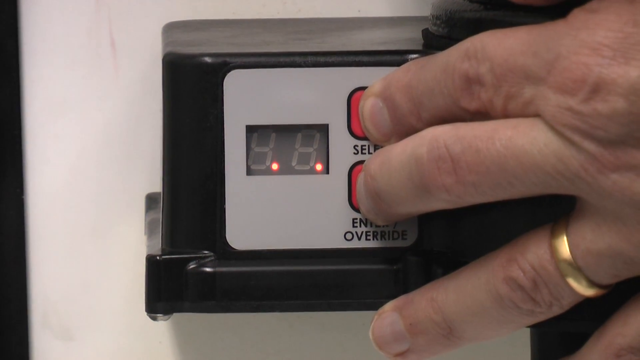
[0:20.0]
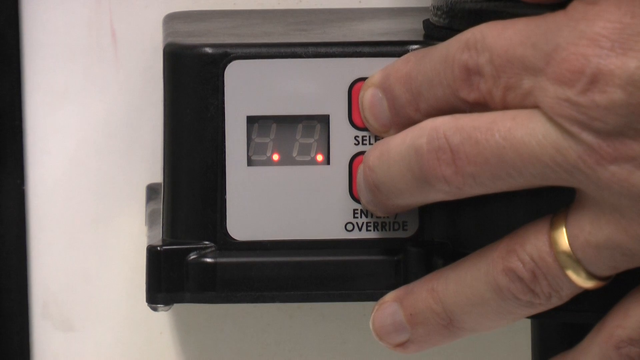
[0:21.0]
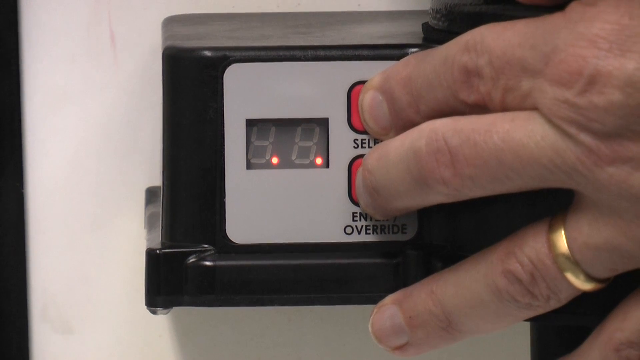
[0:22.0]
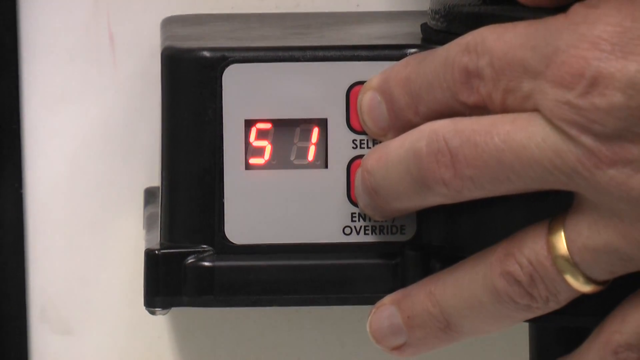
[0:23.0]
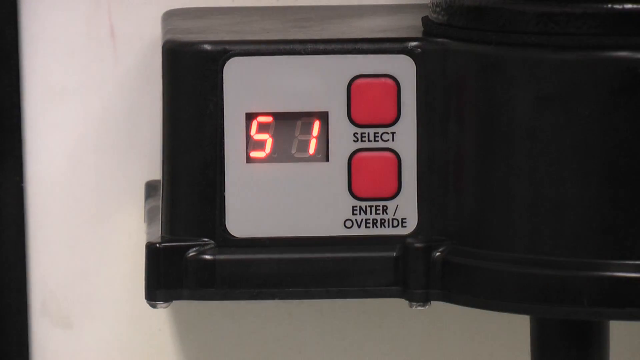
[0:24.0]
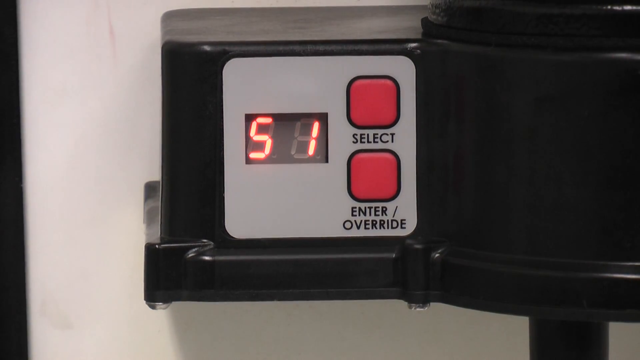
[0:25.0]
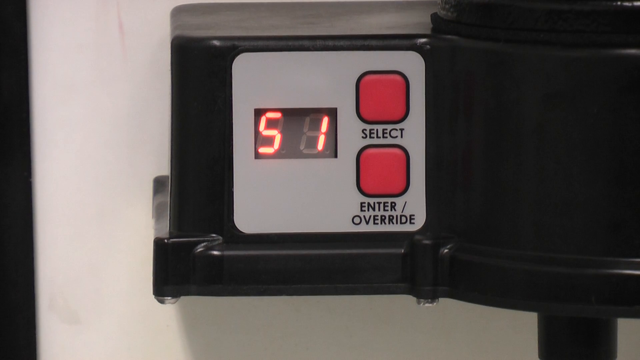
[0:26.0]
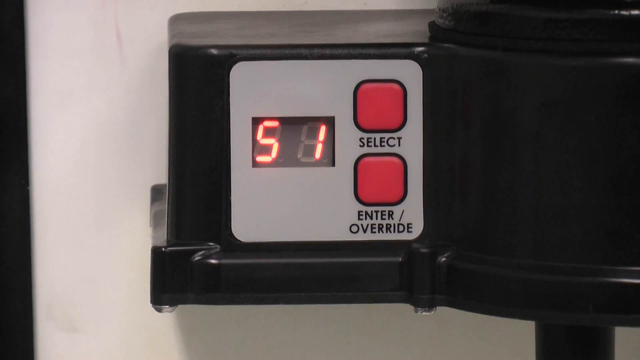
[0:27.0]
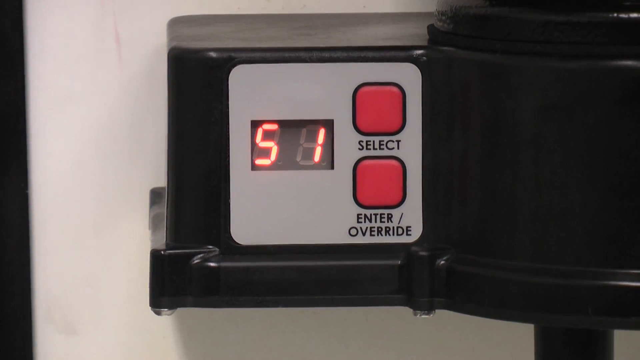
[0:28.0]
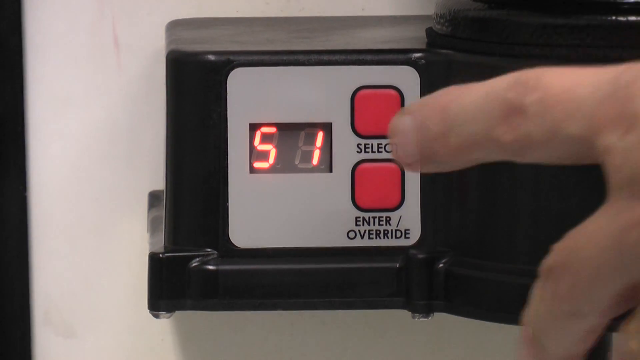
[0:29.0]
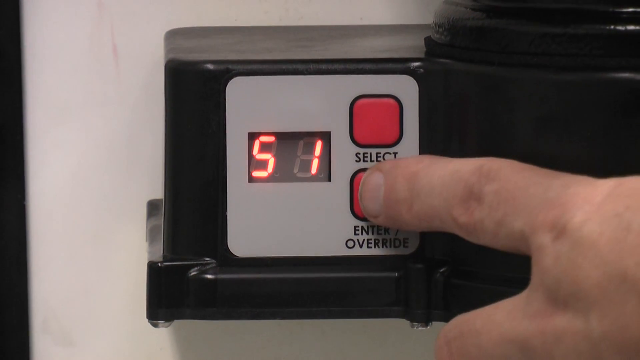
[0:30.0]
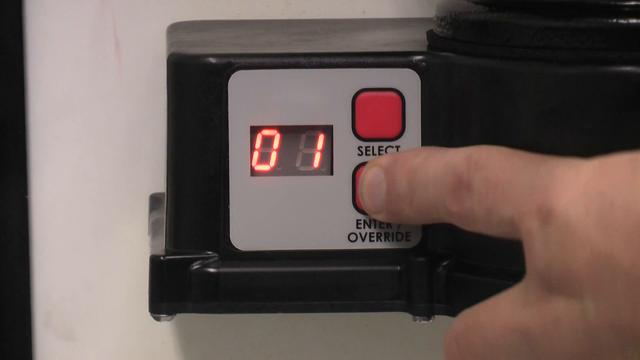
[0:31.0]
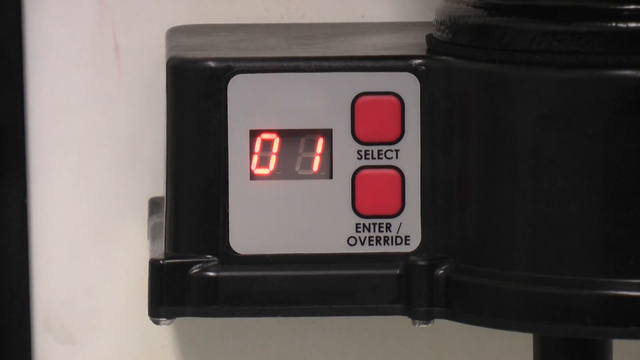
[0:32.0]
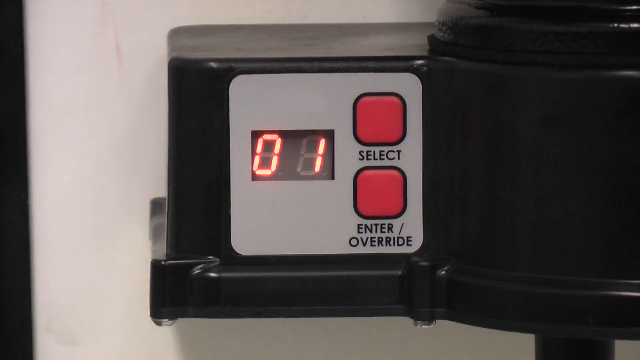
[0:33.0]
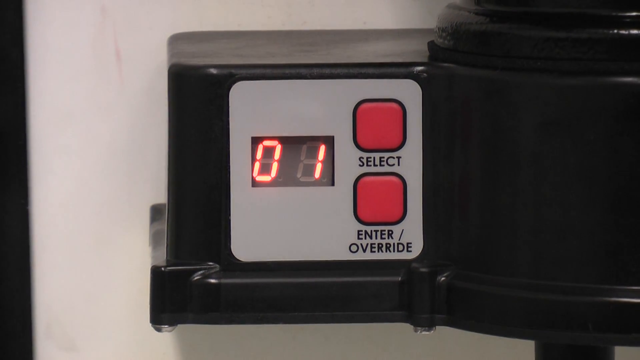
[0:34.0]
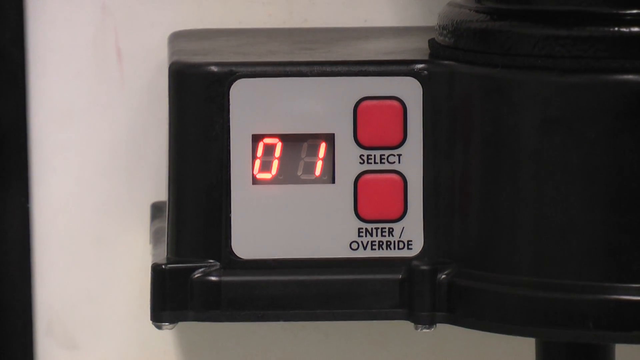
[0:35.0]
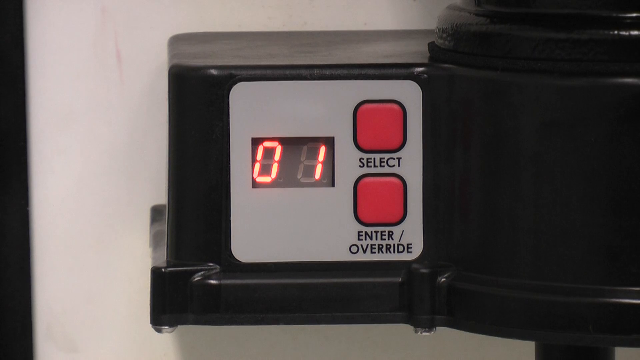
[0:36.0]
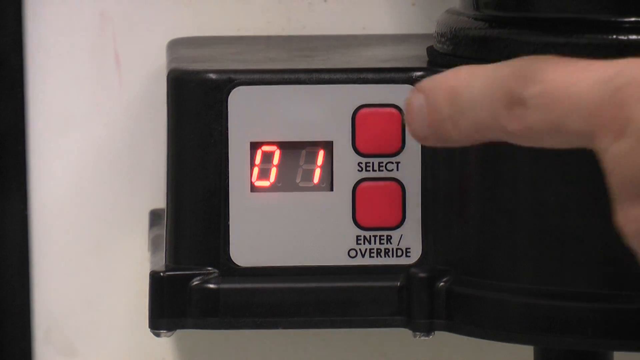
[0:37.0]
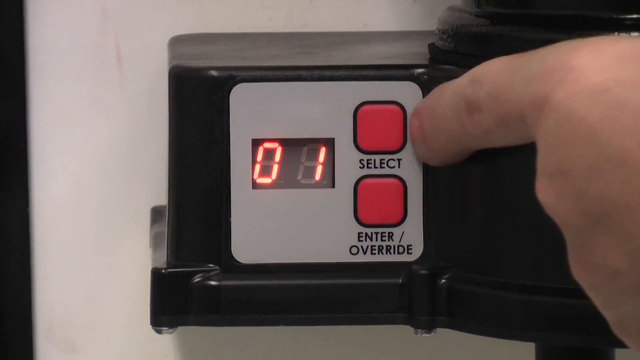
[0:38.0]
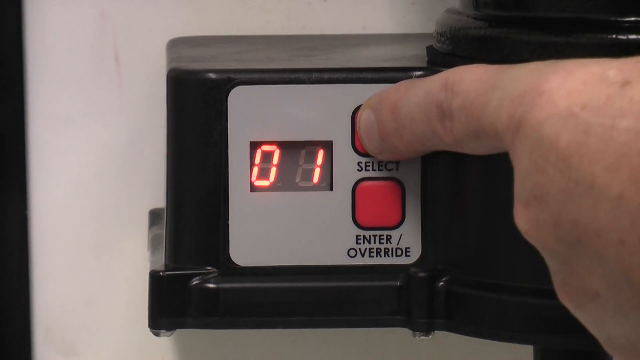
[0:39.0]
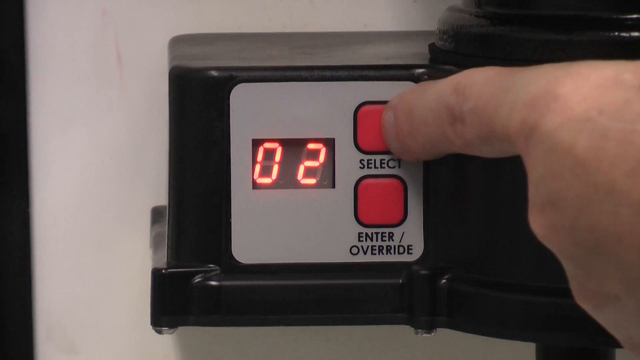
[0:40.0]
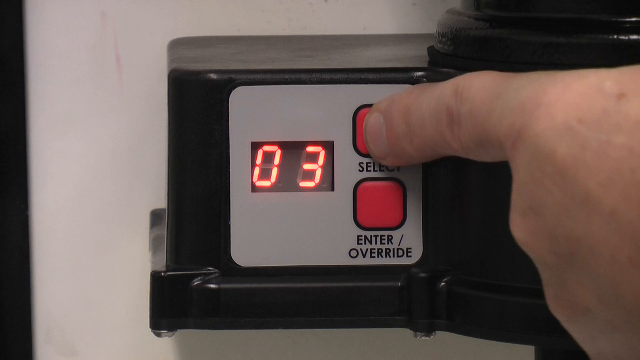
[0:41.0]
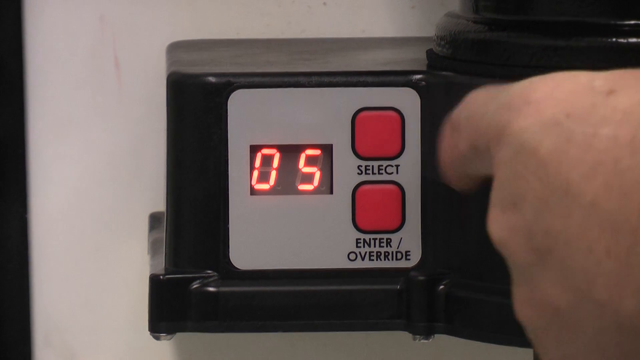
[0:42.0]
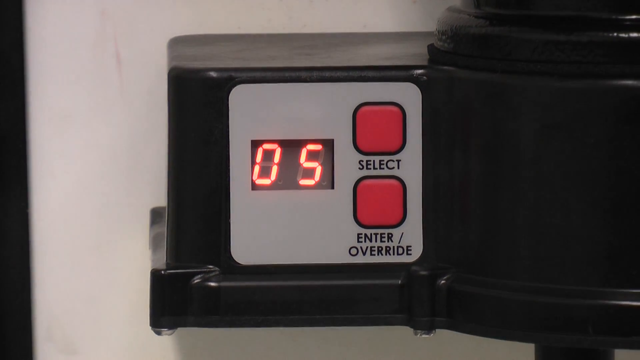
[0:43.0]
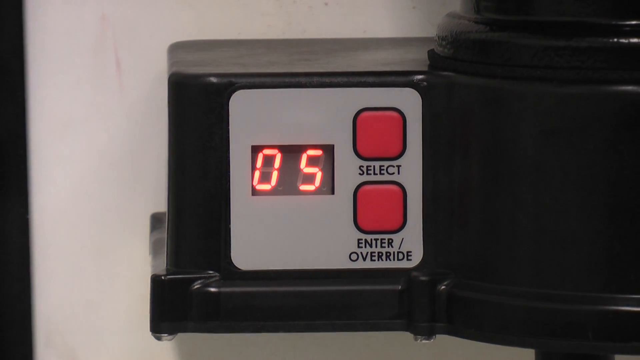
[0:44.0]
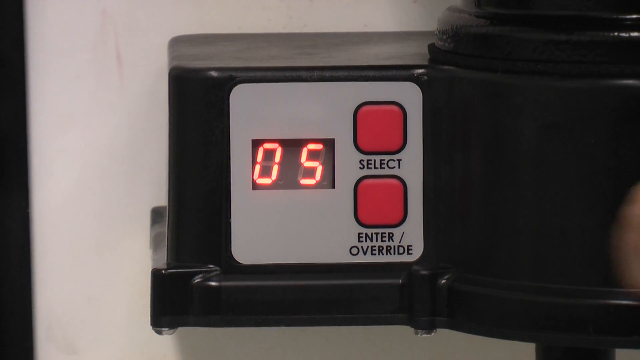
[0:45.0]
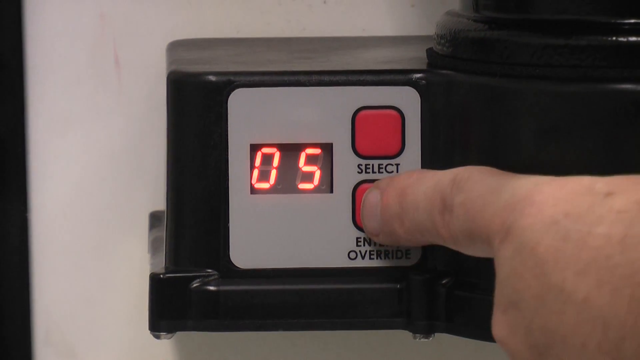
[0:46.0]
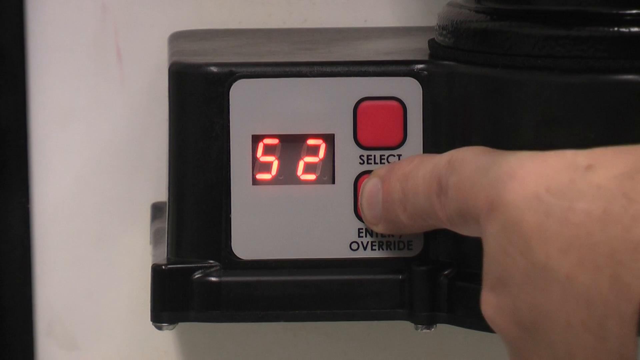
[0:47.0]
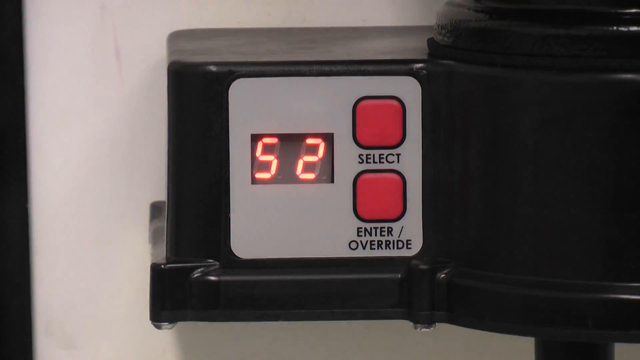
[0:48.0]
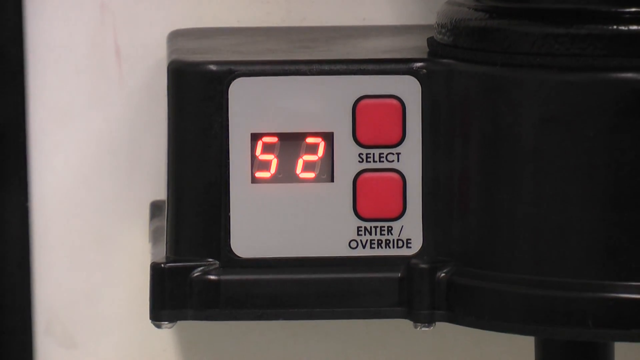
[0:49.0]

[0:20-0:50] A hand that looks like a man's, wearing a wedding ring, presses the "select" and "enter/override" buttons on the HVAC system at the same time, pushing them multiple times. The number 51 appears on the monitor. He presses the enter/override button and the display goes back to 01. He then presses the select button and it counts 2, 3, 4, 5, stopping at 5. He presses enter/override and the display shows 52.